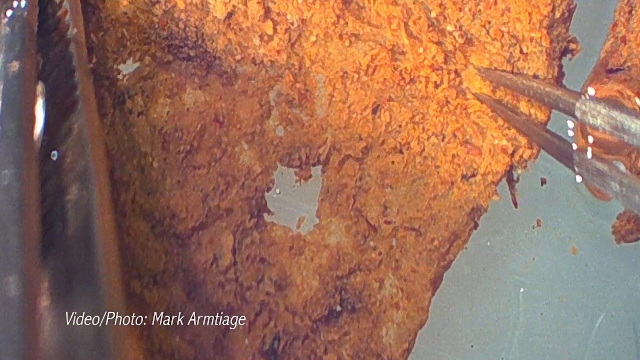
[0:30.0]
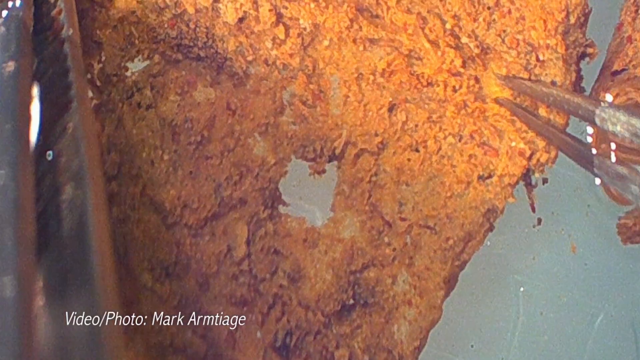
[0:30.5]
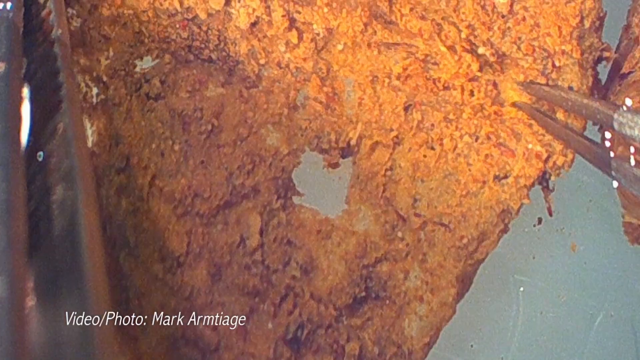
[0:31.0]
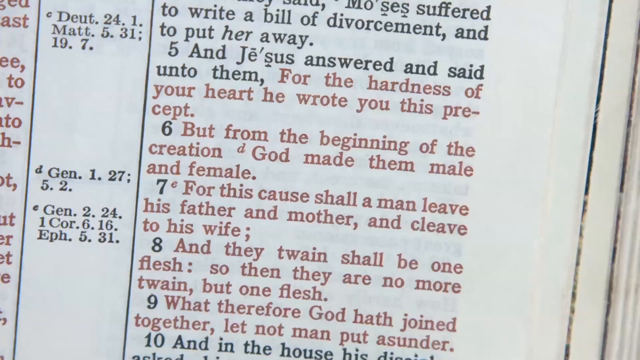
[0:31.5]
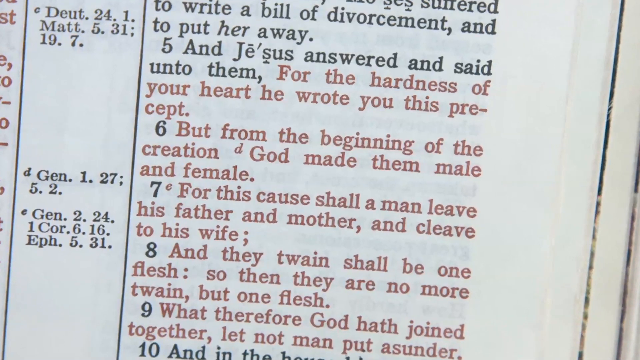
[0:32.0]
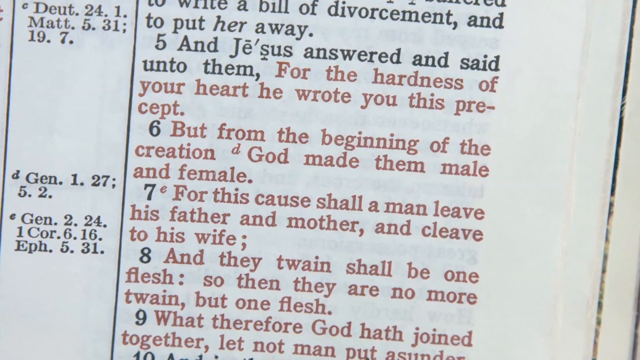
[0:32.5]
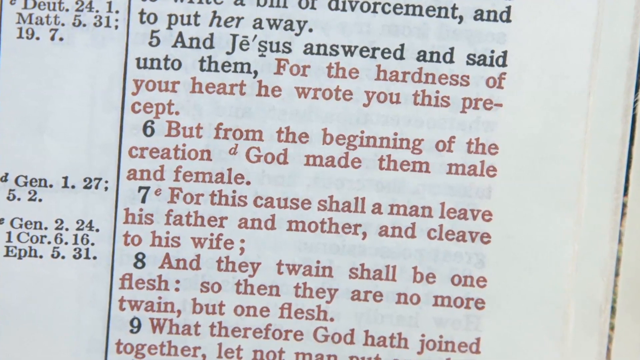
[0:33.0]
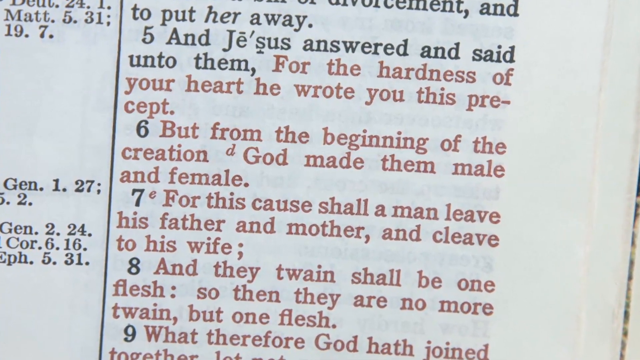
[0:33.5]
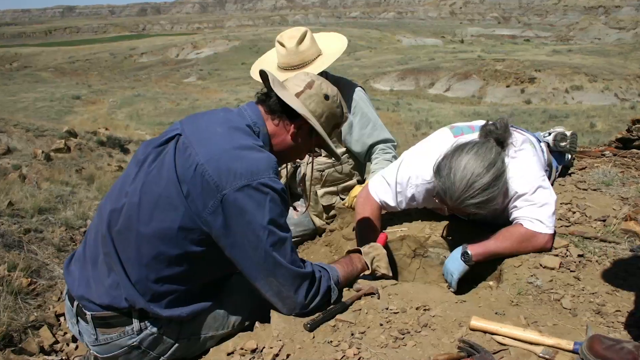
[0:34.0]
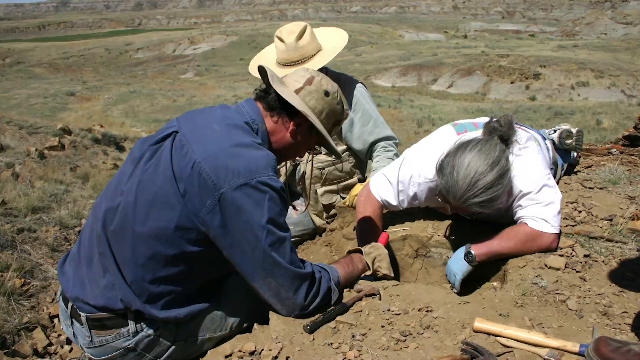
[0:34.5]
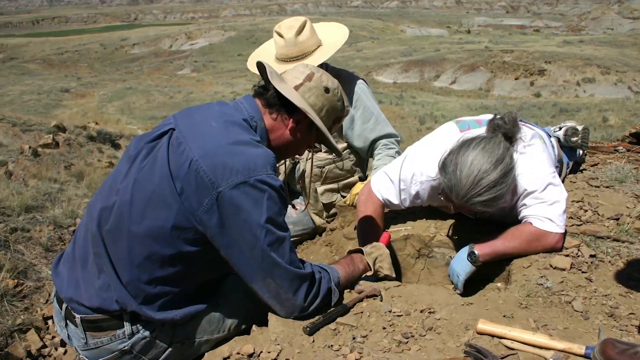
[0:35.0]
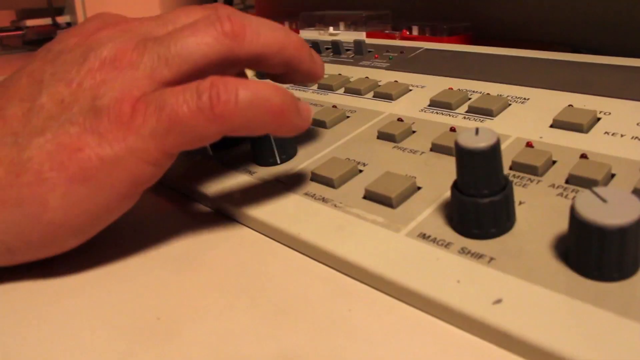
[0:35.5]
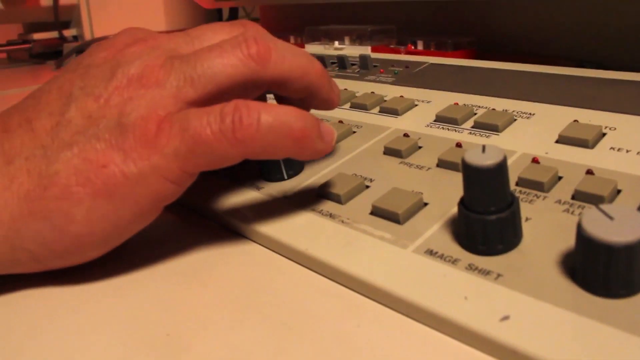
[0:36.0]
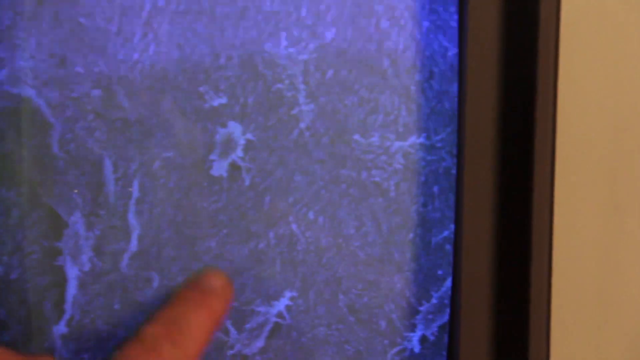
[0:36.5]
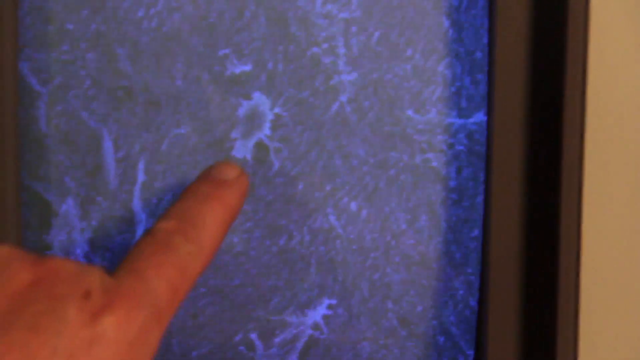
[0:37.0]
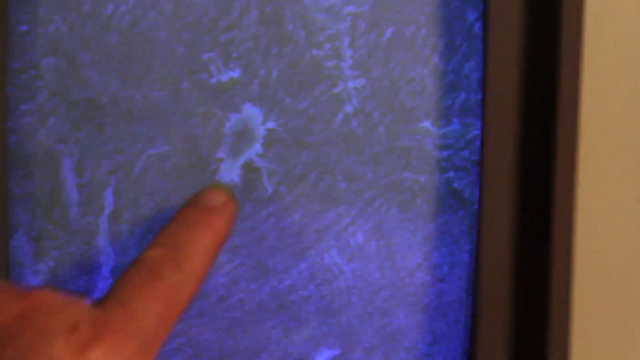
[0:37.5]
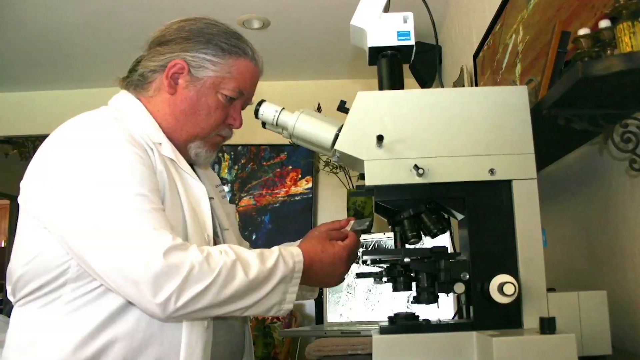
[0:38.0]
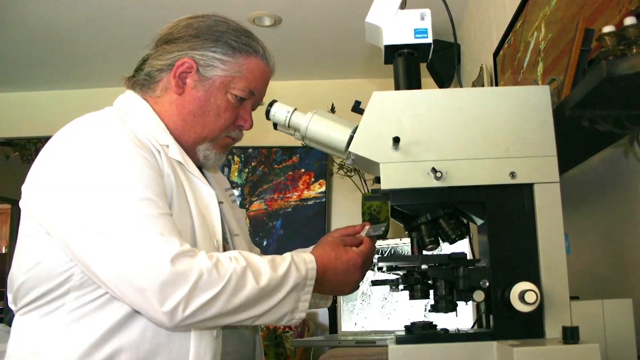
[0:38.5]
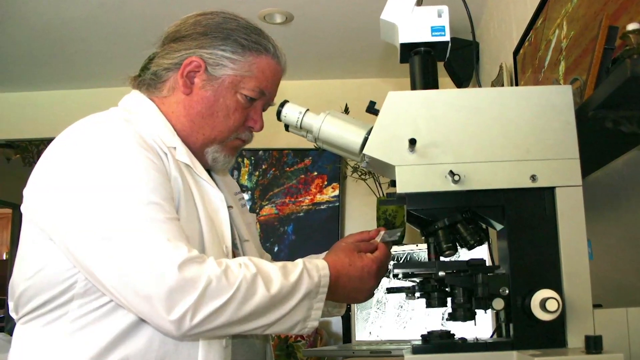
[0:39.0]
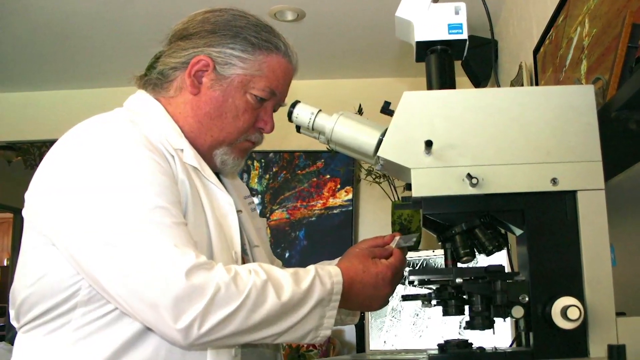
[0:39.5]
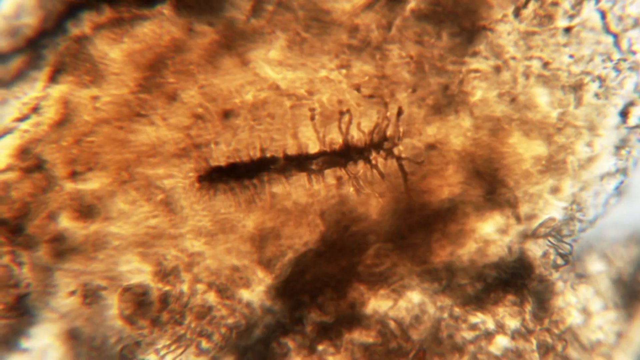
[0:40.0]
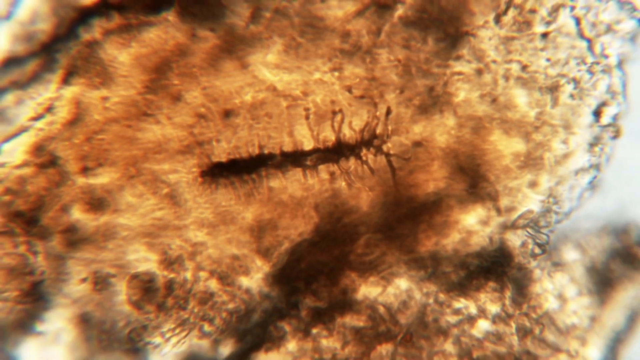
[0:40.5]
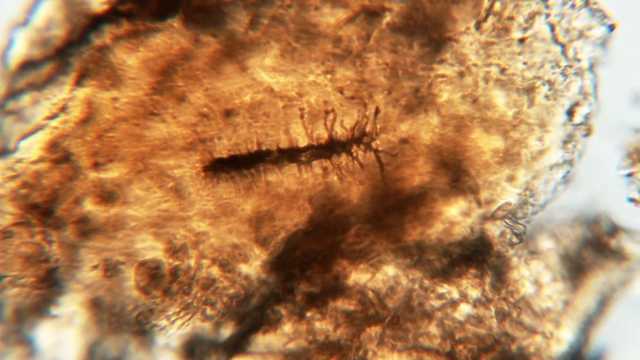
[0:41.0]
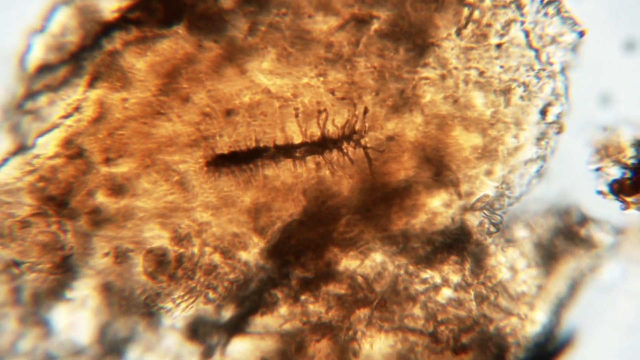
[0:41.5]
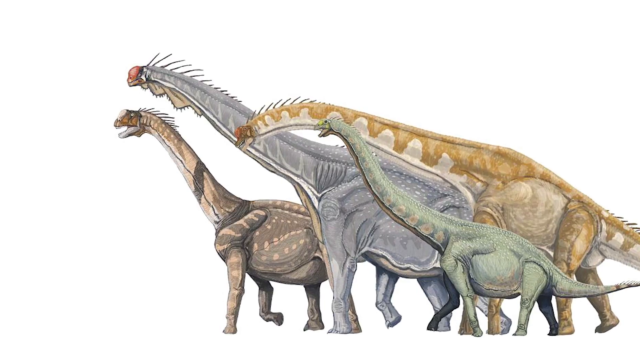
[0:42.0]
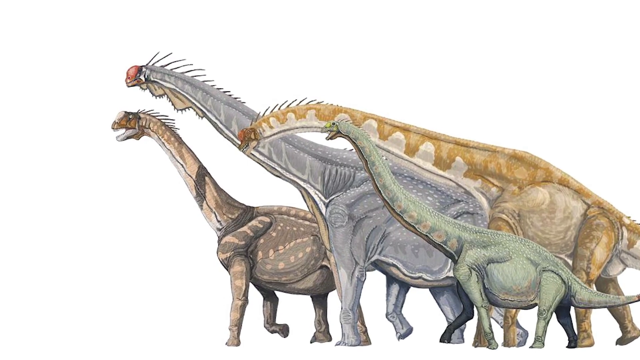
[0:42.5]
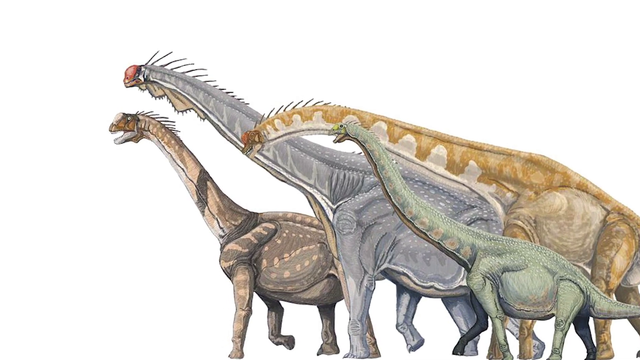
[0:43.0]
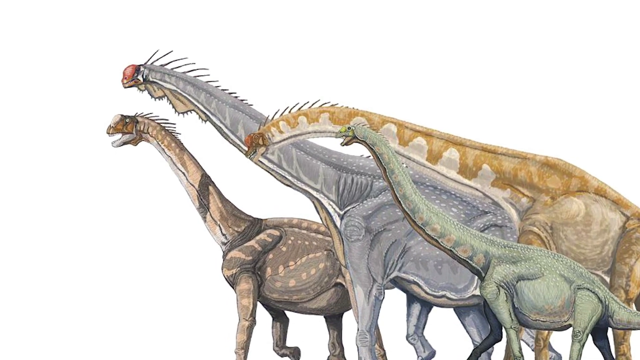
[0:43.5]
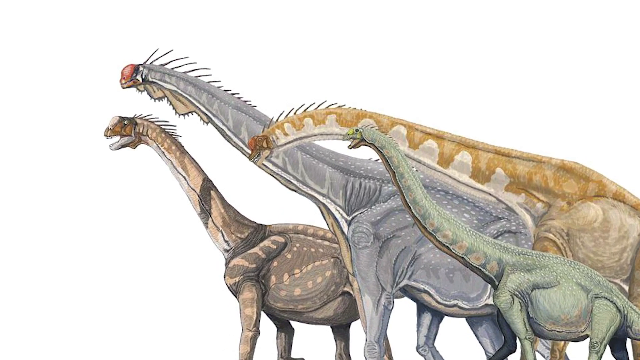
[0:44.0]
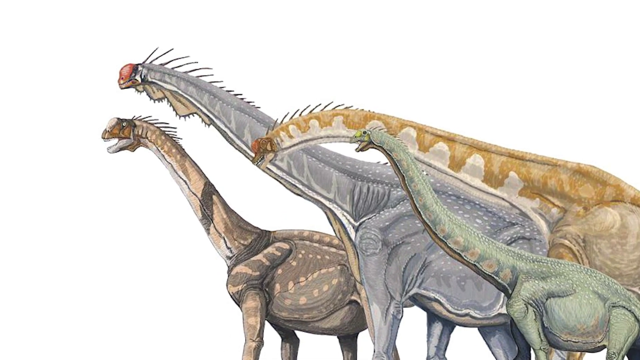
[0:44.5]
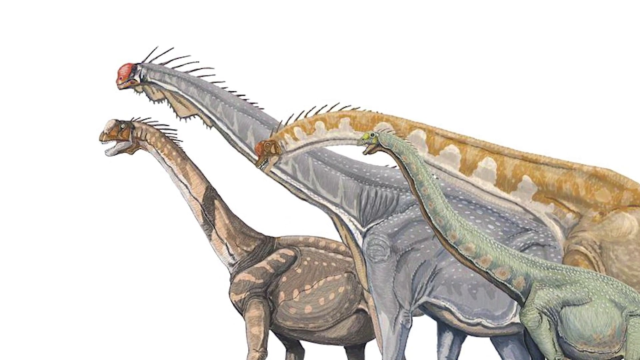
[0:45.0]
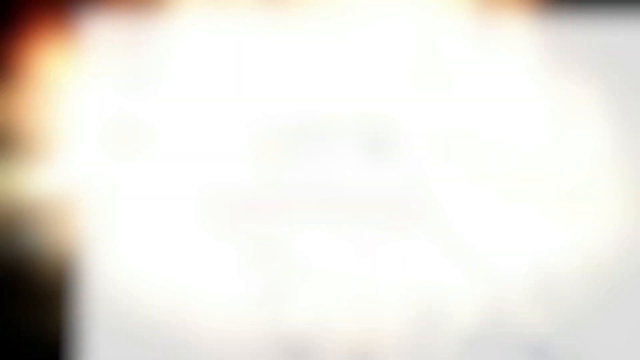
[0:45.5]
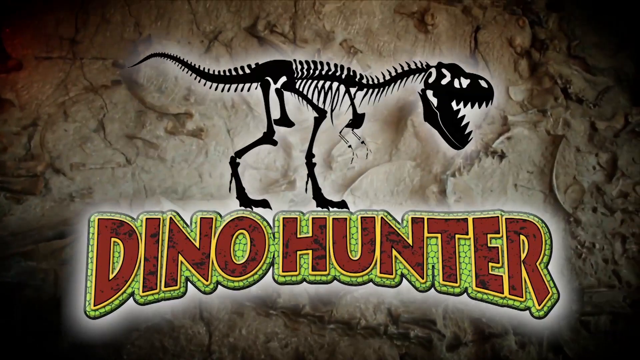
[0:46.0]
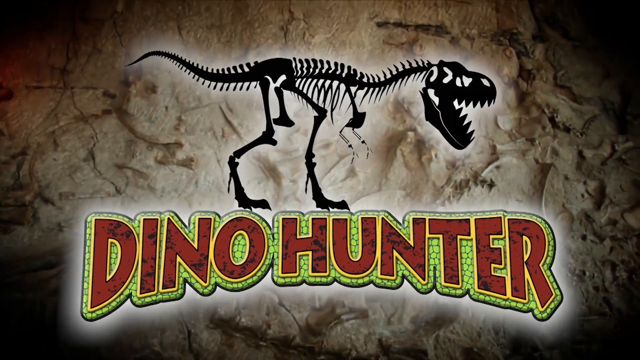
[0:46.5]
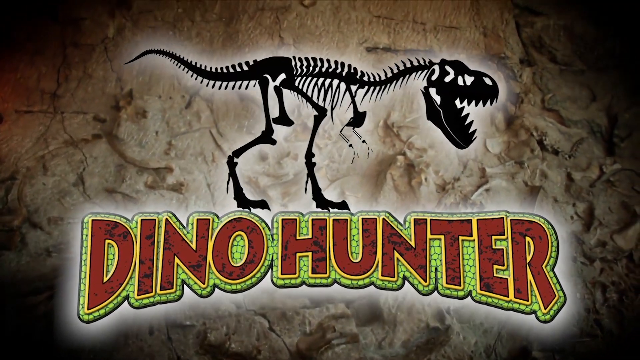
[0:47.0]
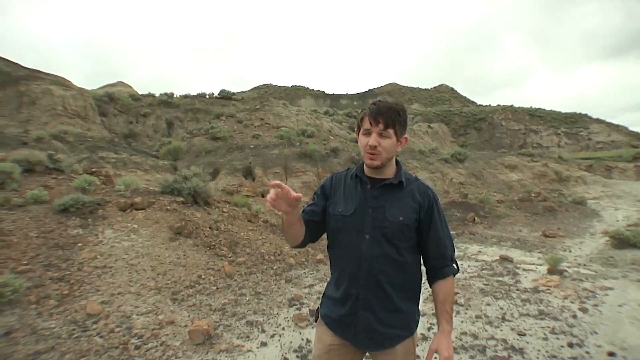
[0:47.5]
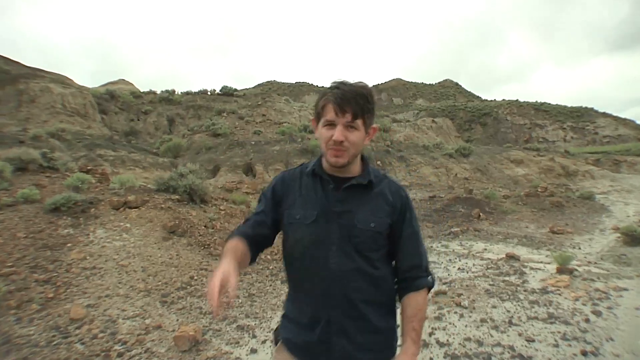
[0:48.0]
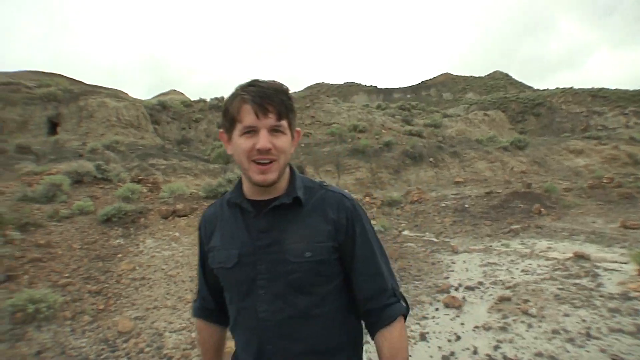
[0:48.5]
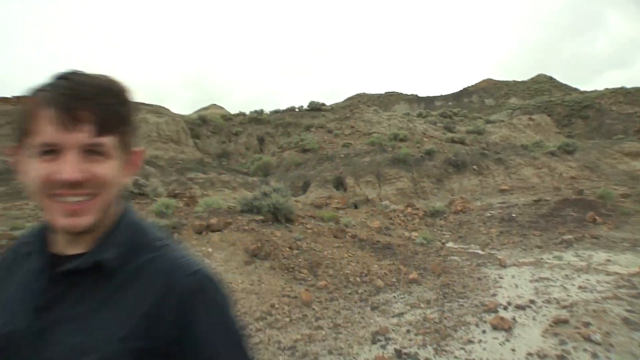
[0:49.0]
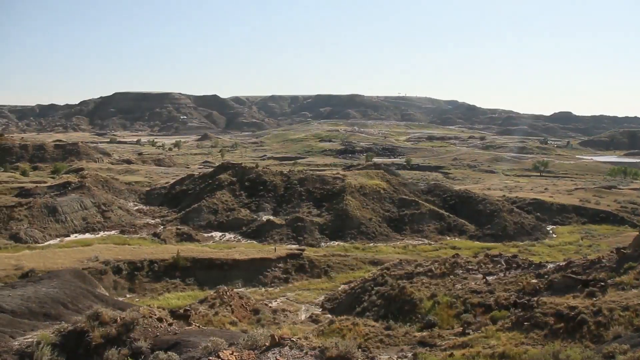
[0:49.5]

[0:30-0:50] Briefly, what looks like tissue is viewed through a microscope and pulled by tweezers to the right side of the screen. A close-up of verses in the Bible follows, with highlighted verses beginning "And Jesus answered and said" and including "For the hardness of your heart he wrote you this precept/But from the beginning of the creation God made them male and female/For this cause shall a man leave his father and mother, and cleave to his wife/And they twain shall be one flesh/So then they are no more twain, but one flesh." Then, at an archaeological dig site, someone lies on their stomach looking down into a hole dug in the ground. On the left, another person crouches looking into the same hole with a hand resting on its edge, and behind them another person sits in the dirt. A close-up shows someone's hand on what looks like a computer keyboard that has dials in addition to buttons. On a monitor screen, someone's finger points to an object that looks like a close-up of tissue. A man in a white lab coat looks through the lenses of a large microscope, holding a microscope slide in his left hand in front of him. What looks like tissue is viewed through a microscope. An illustration of four dinosaurs follows, then a title card that reads "Dinohunter" with a black graphic of assembled dinosaur bones above it. The scene switches to video of a man standing in a rocky desert; he speaks to the camera and then walks off screen to the left.